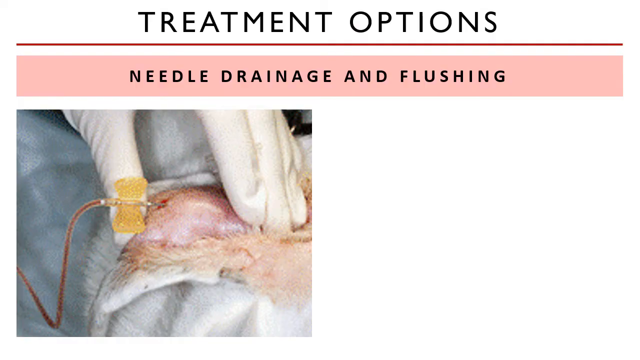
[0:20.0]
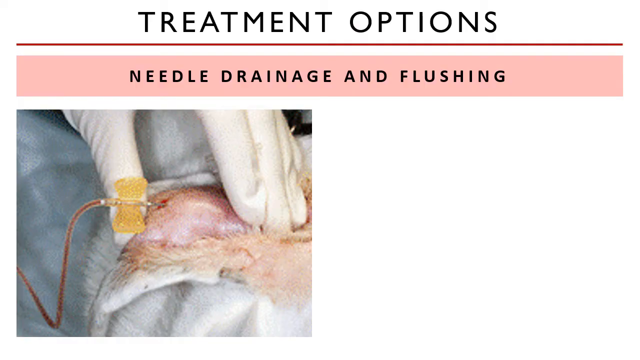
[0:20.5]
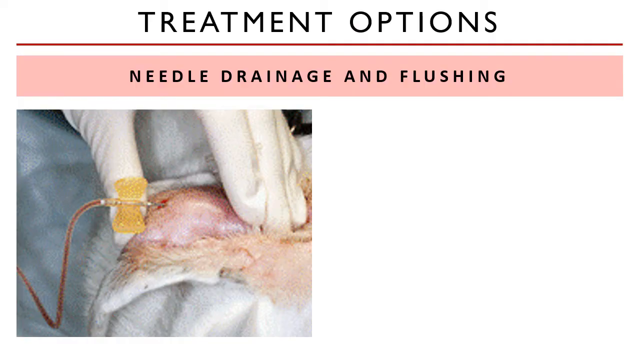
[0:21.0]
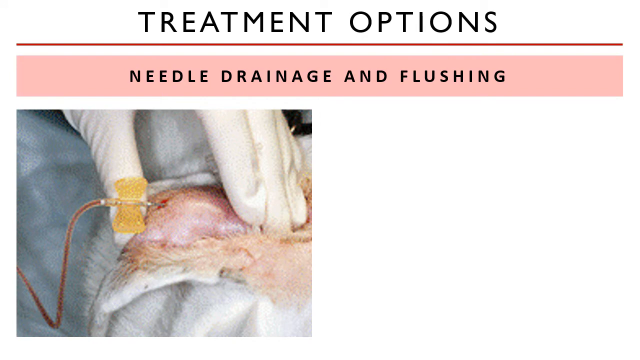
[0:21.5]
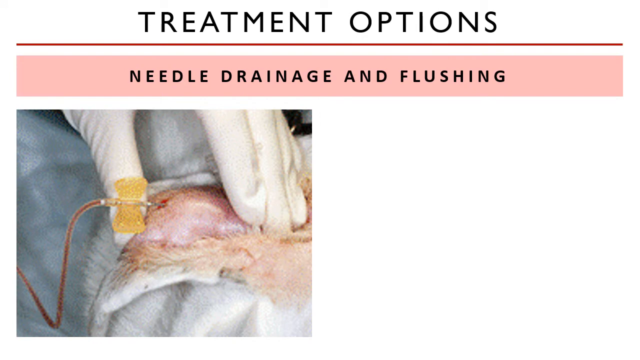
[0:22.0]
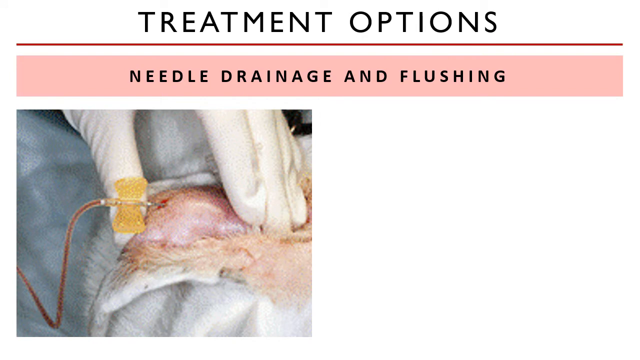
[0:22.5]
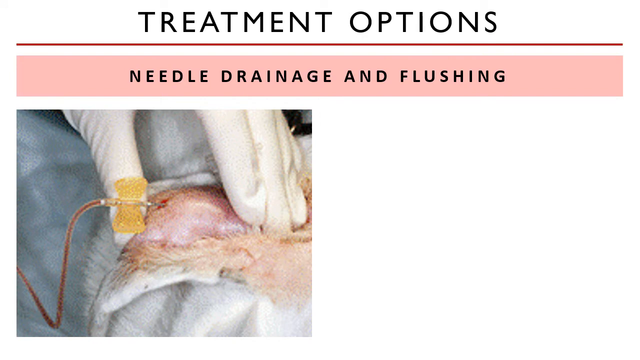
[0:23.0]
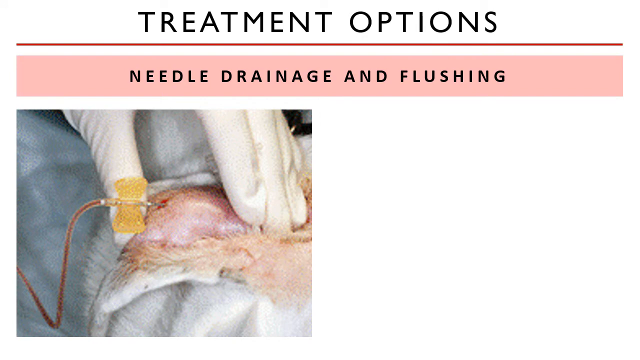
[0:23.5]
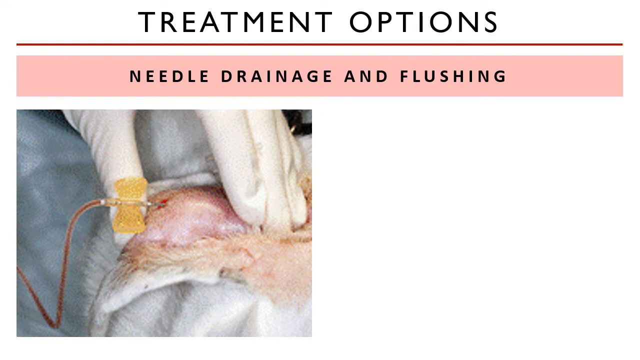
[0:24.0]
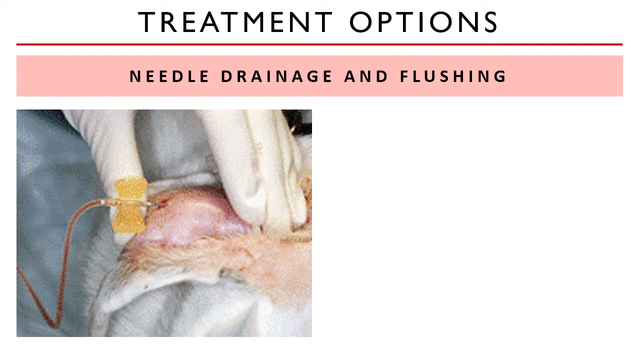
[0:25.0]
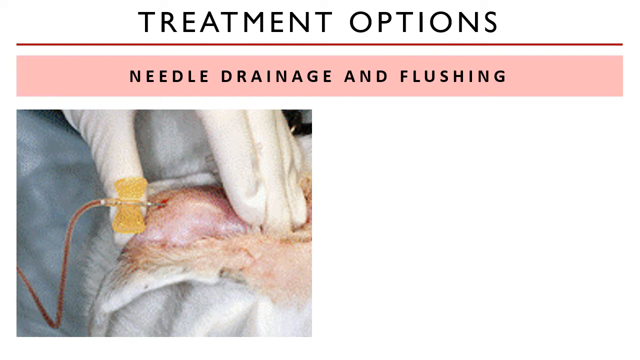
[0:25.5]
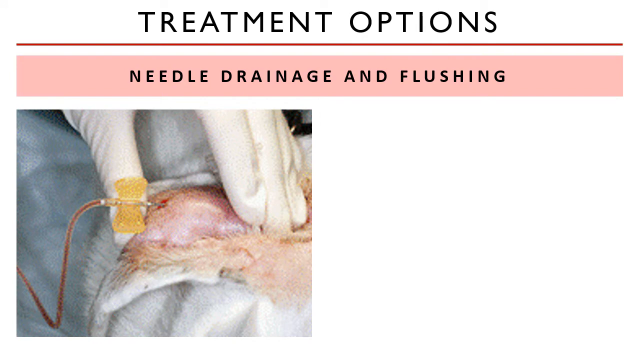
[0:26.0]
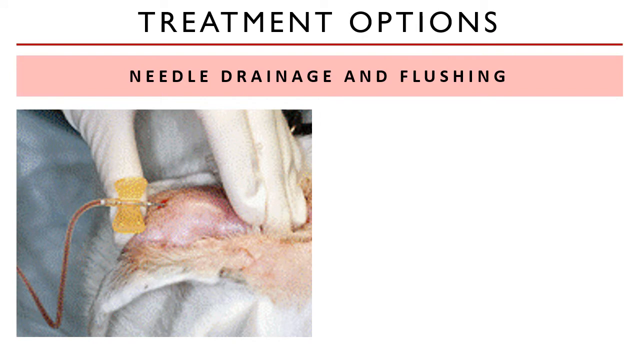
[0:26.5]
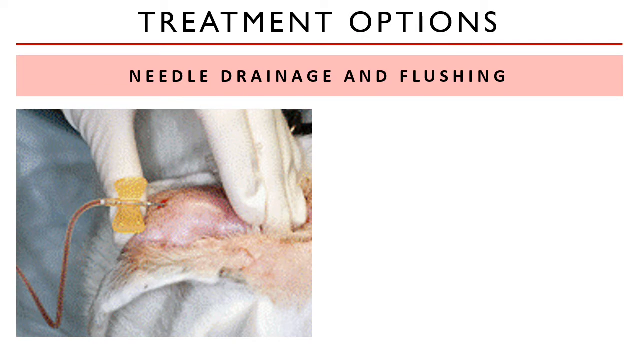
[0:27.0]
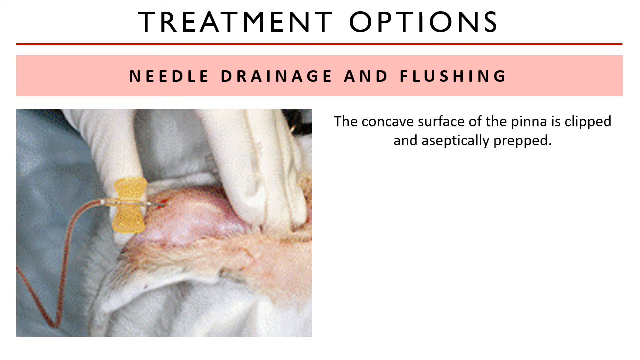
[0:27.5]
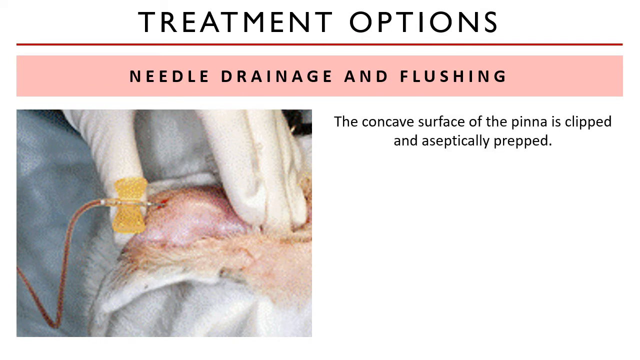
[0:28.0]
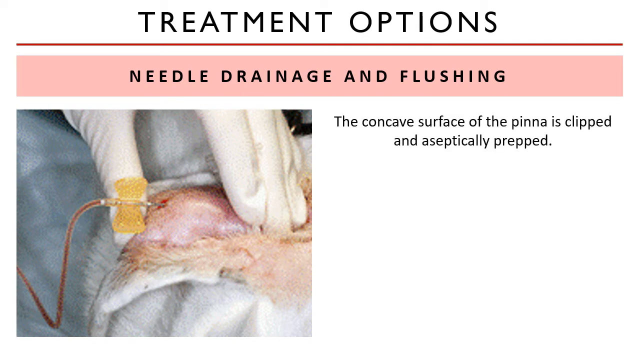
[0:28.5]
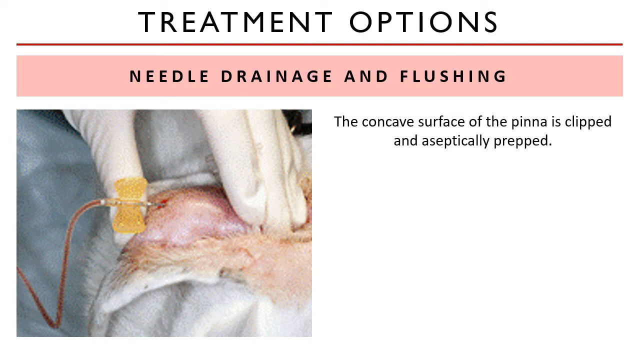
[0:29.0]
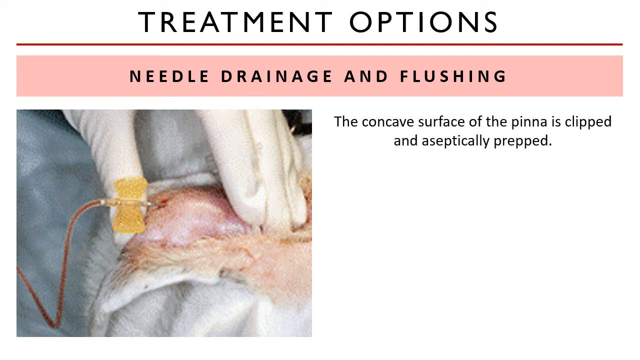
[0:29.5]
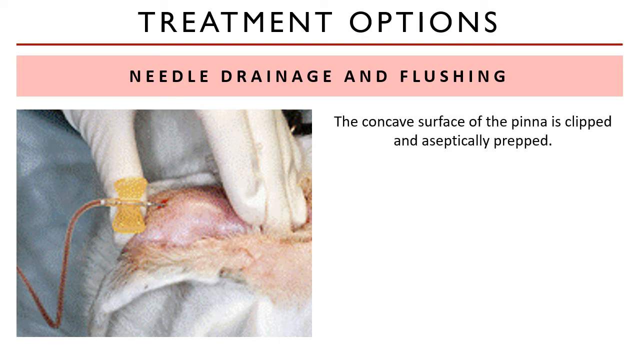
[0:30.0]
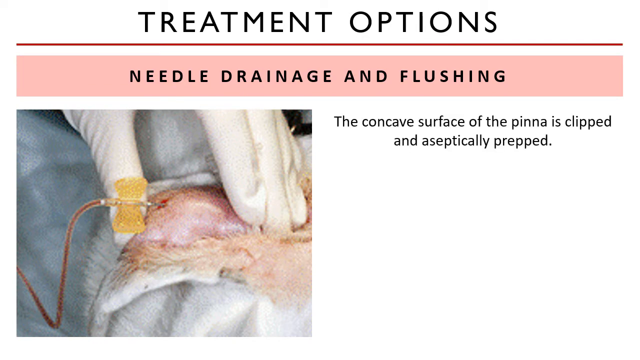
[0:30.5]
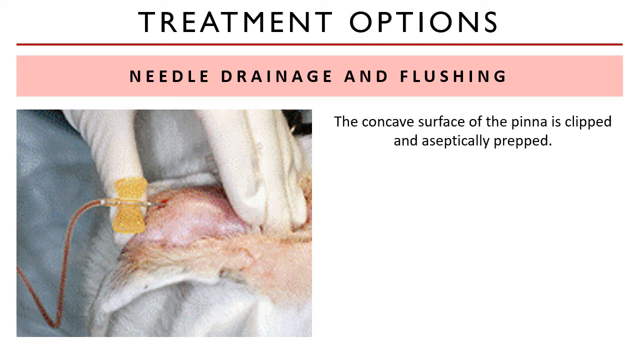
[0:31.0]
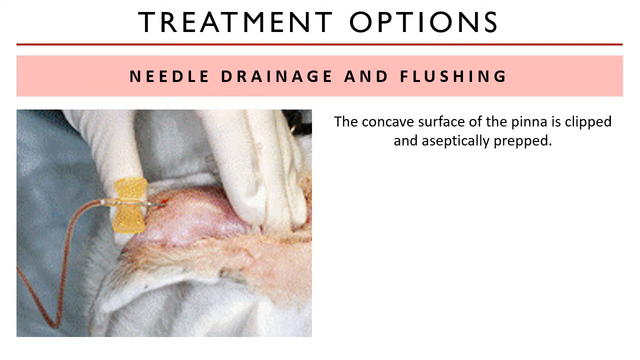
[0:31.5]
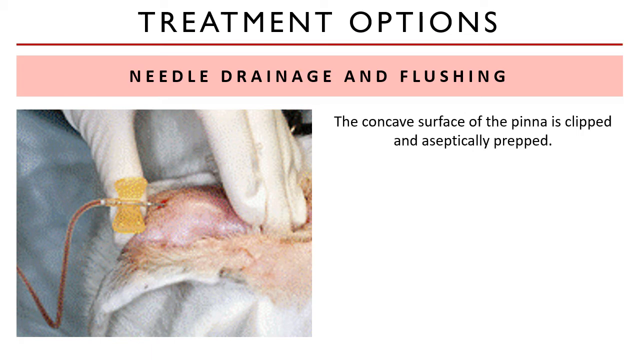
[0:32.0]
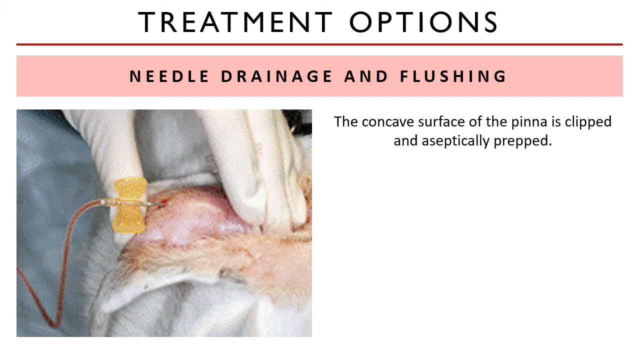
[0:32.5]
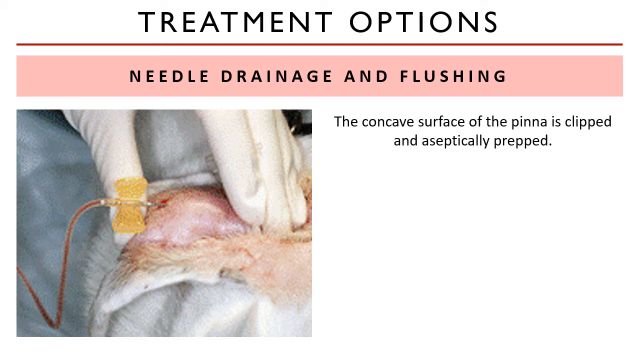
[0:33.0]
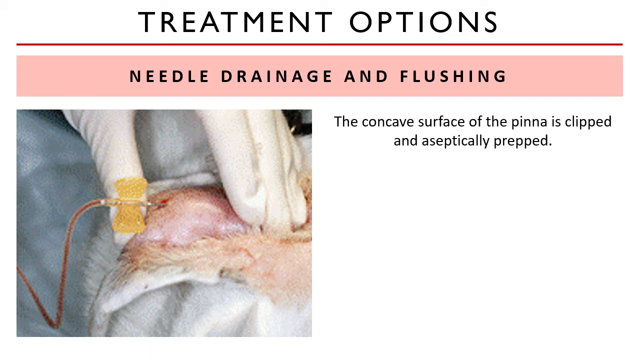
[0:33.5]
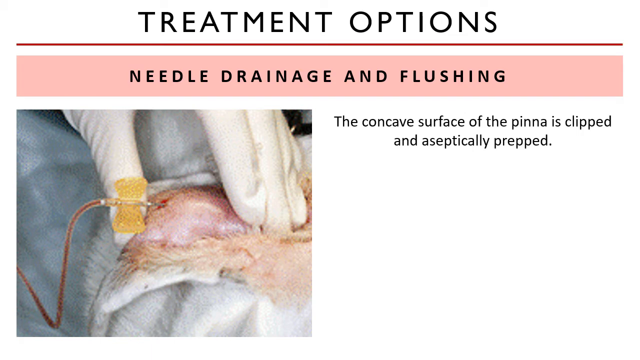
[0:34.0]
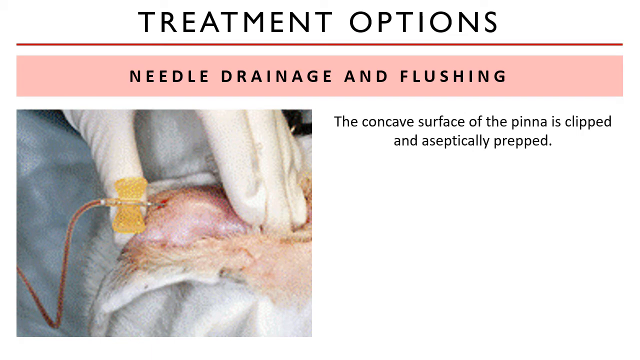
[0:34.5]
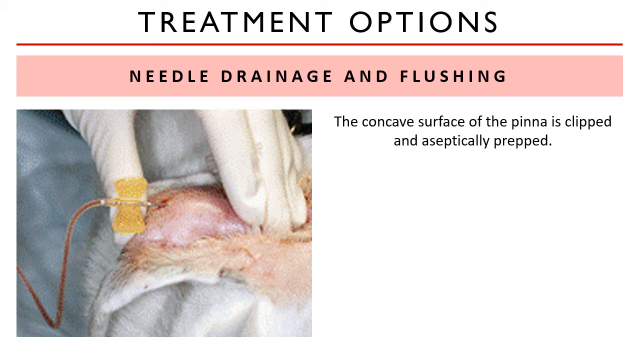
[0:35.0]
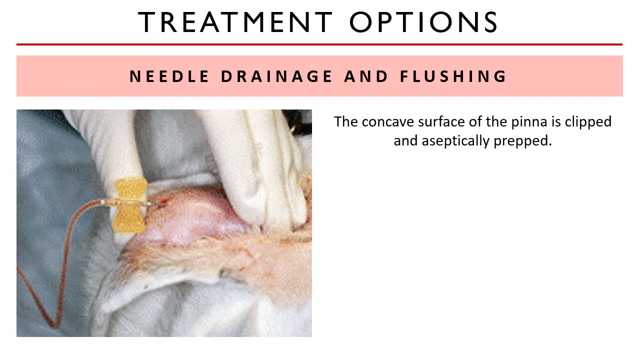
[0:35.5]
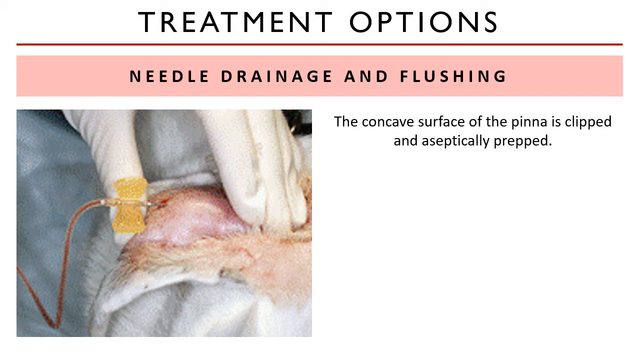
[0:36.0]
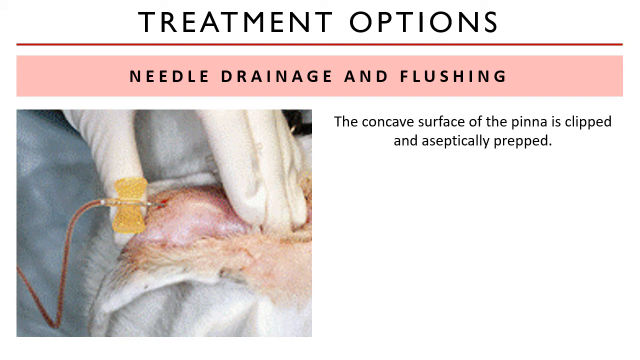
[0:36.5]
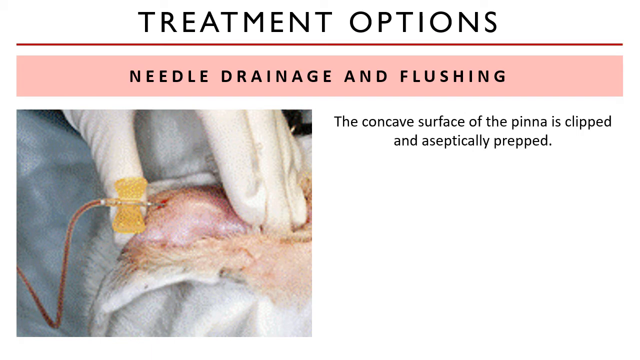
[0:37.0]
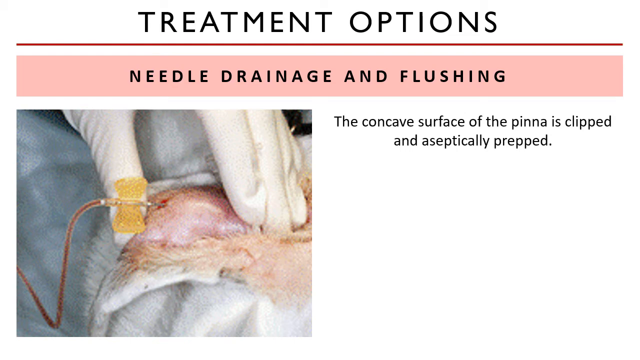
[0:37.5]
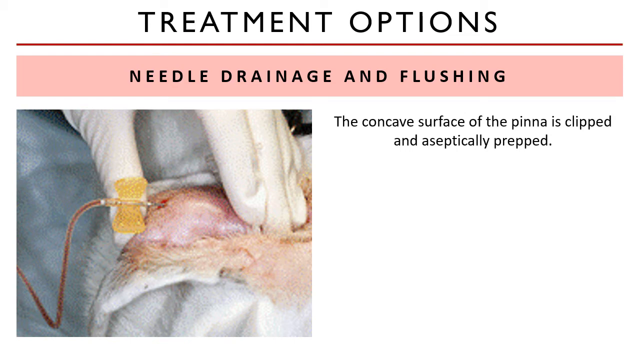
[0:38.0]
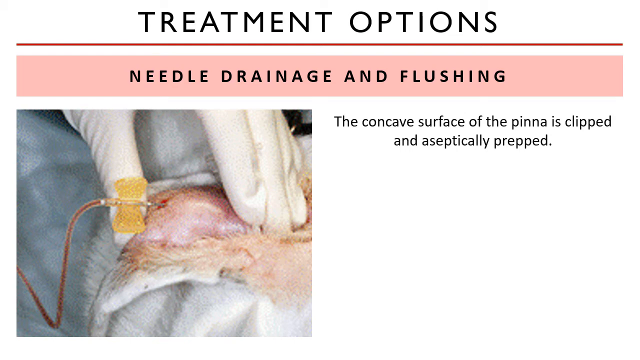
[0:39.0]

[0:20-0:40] At the top, in black all-capital letters, the text reads "treatment options." A thin red line runs across, then a white background, then a pink border across the screen. On the pink border, in black capital letters, it reads "needle drainage and flushing." An image shows a quite swollen area with a needle in it, a little blood around the area, and blood coming out. Beige fur surrounds it, so it is some type of animal, maybe a dog. Text then appears to the right of the picture: "the concave surface of the pinna is clipped" and, on the next line, "aseptically prepped." That seems to be the last text to appear. Most of one hand is visible in the picture; judging by the hand and thumb placement, it looks like the left hand, and it wears a white latex glove.